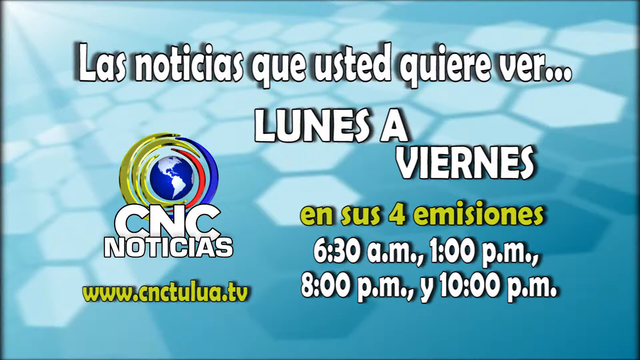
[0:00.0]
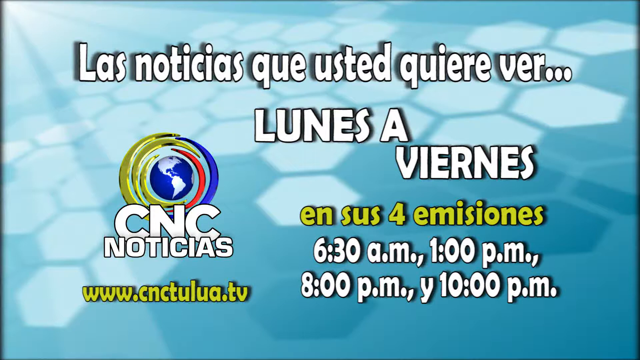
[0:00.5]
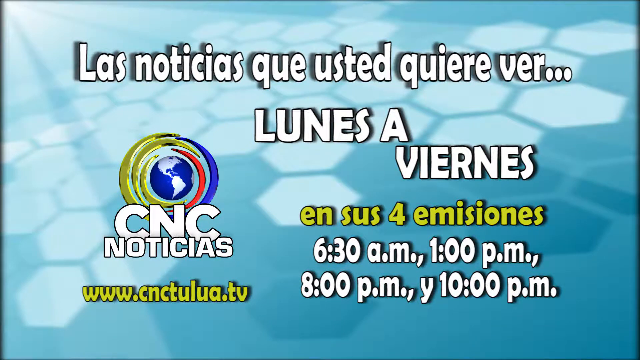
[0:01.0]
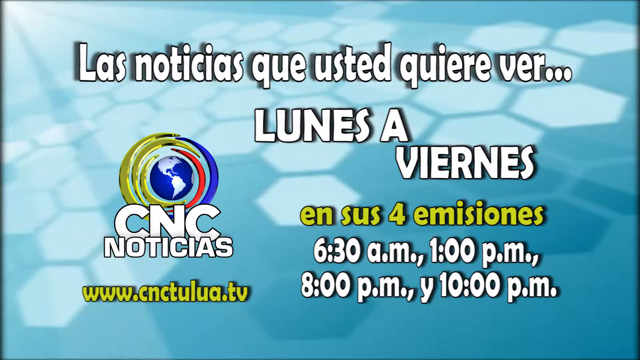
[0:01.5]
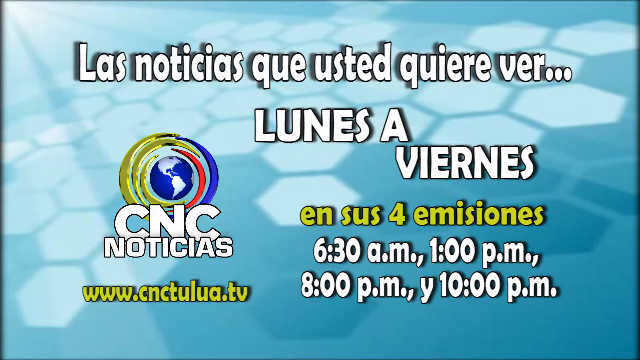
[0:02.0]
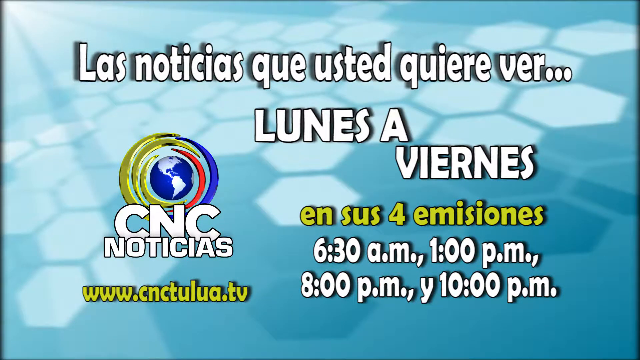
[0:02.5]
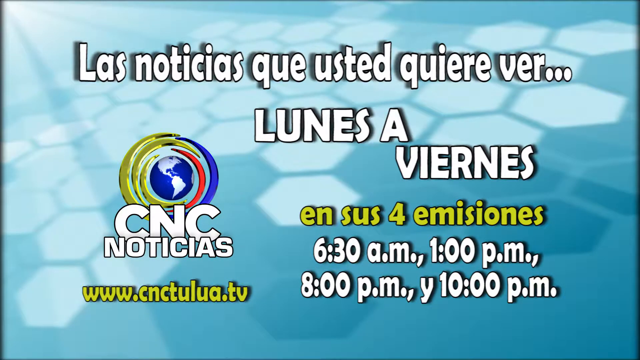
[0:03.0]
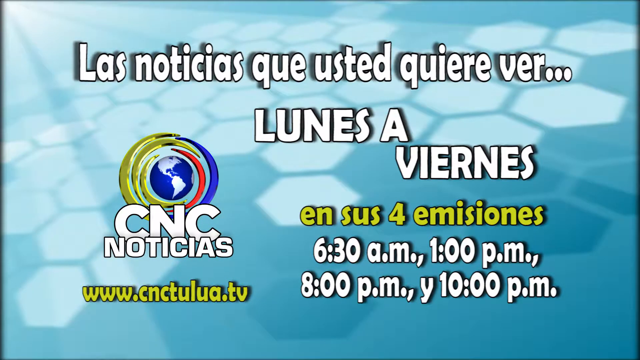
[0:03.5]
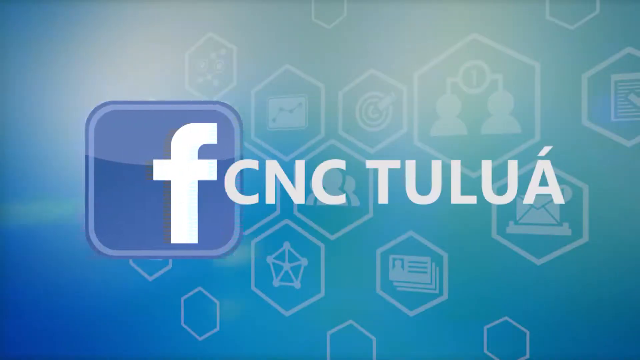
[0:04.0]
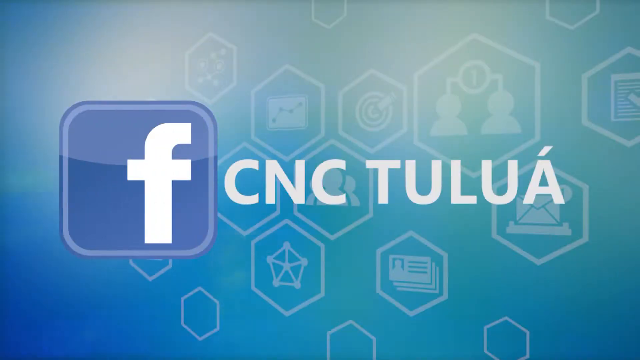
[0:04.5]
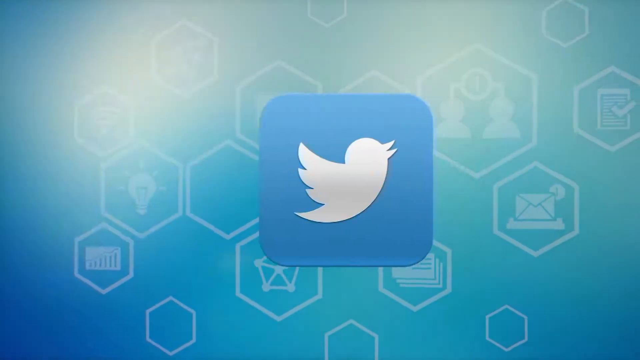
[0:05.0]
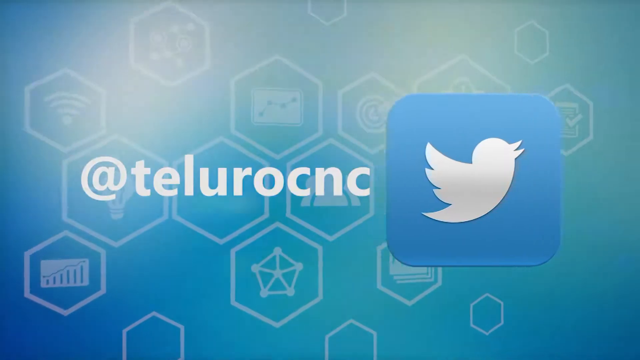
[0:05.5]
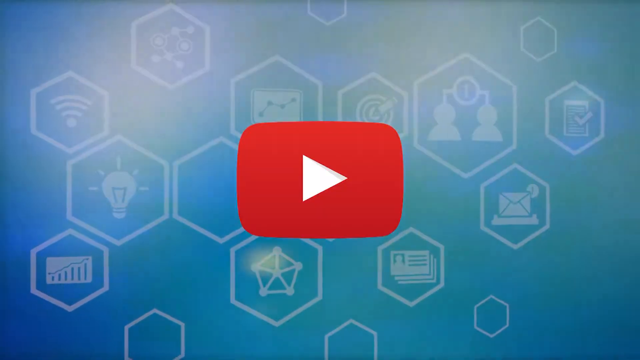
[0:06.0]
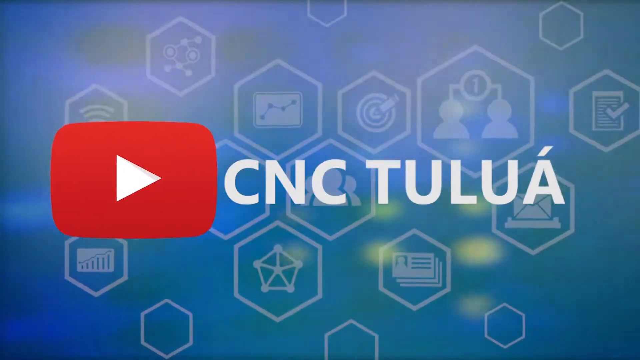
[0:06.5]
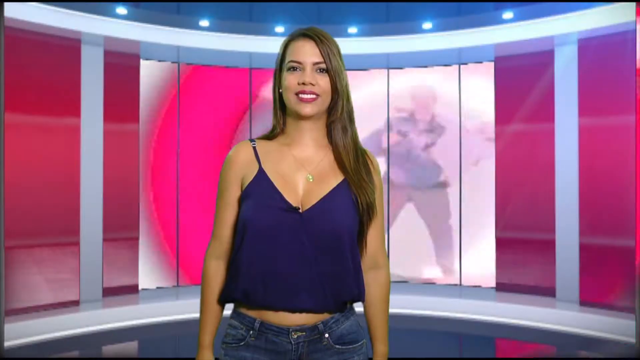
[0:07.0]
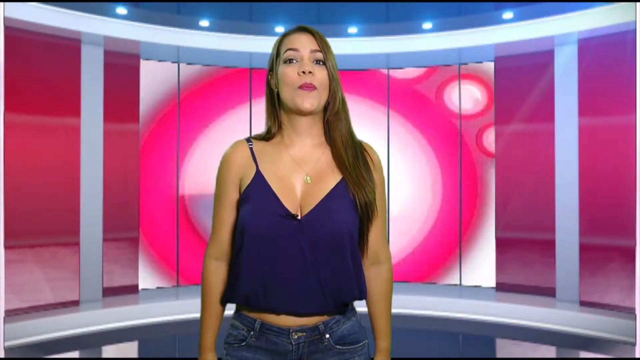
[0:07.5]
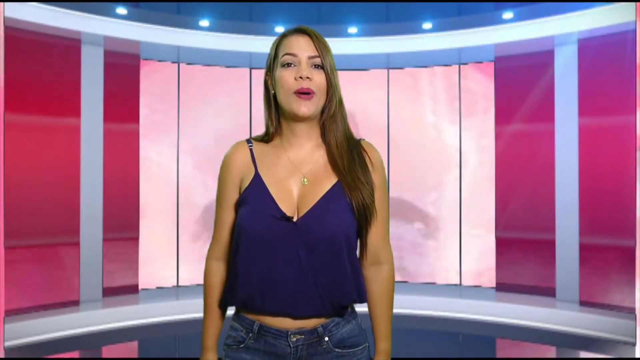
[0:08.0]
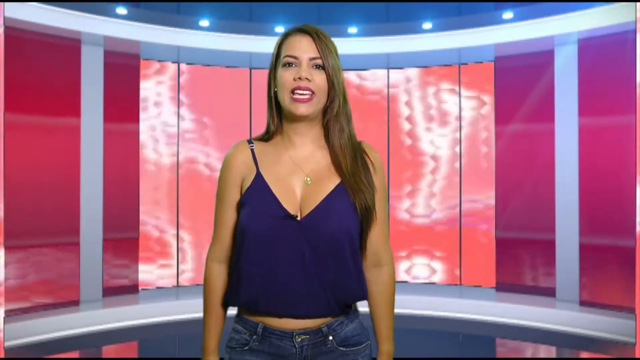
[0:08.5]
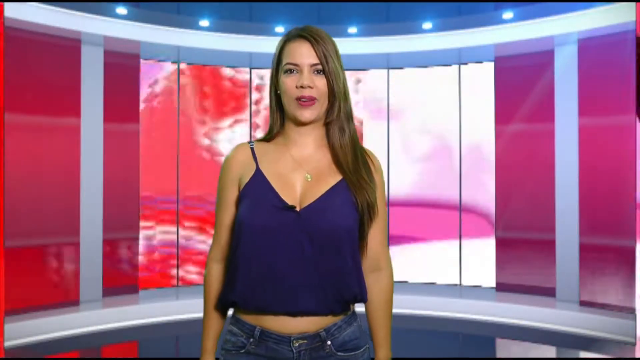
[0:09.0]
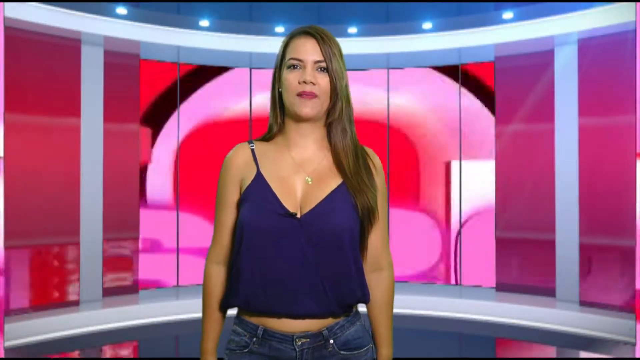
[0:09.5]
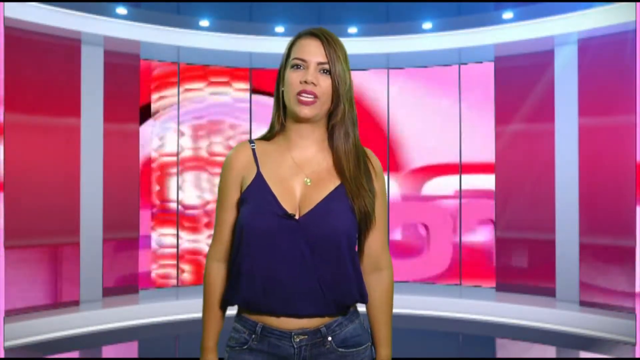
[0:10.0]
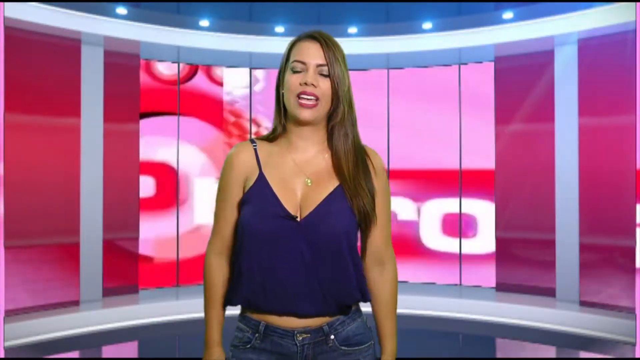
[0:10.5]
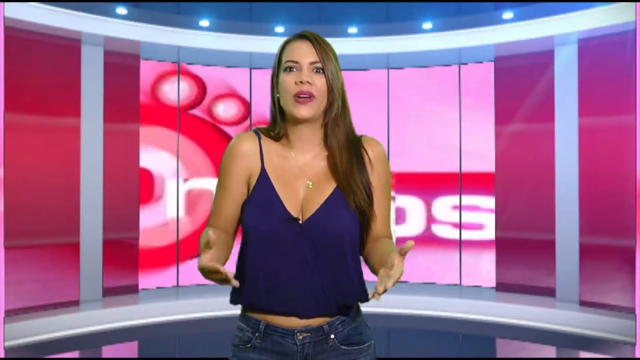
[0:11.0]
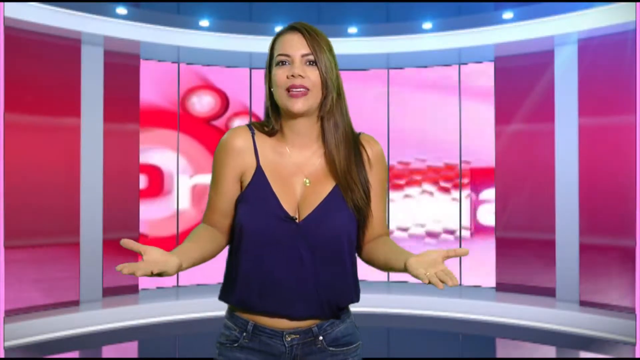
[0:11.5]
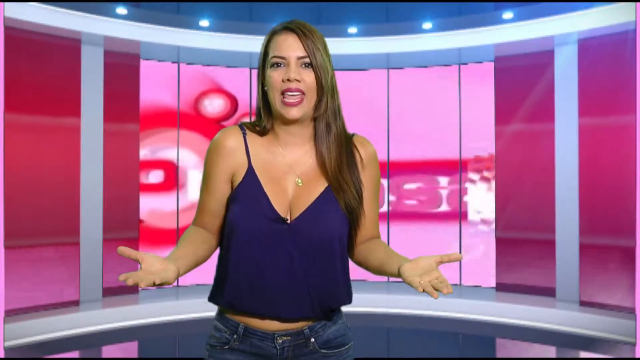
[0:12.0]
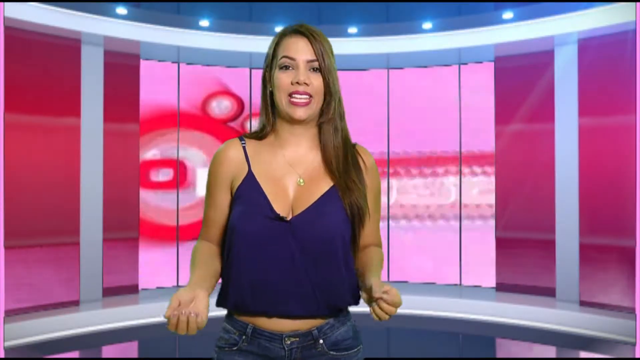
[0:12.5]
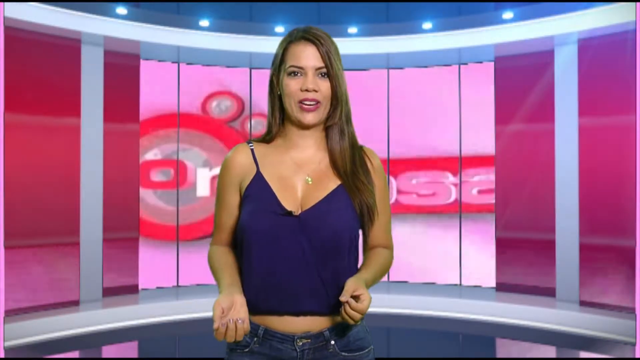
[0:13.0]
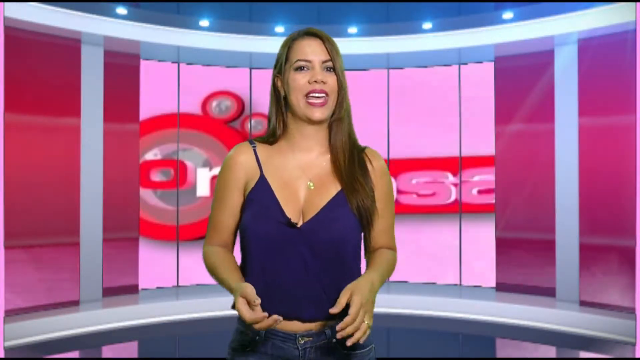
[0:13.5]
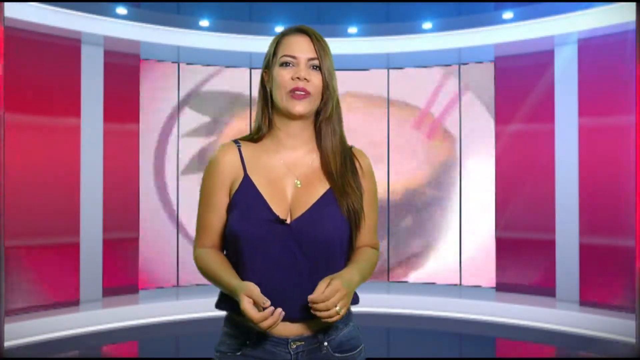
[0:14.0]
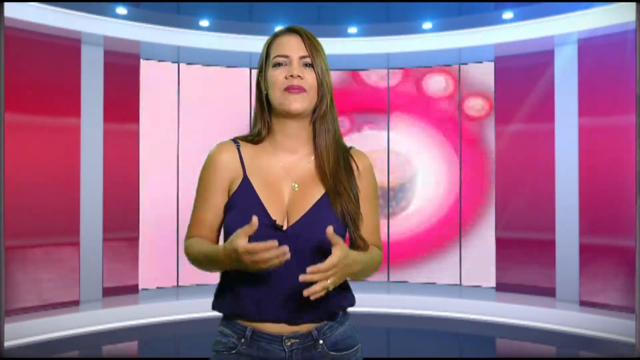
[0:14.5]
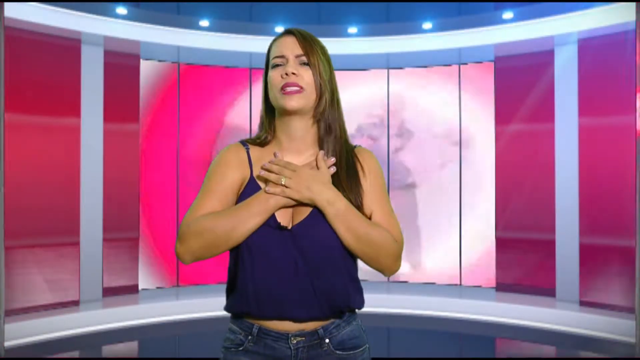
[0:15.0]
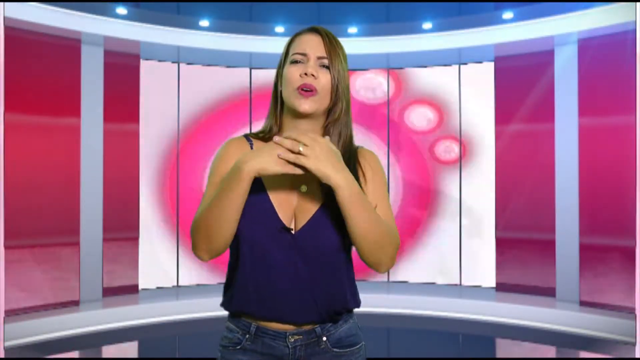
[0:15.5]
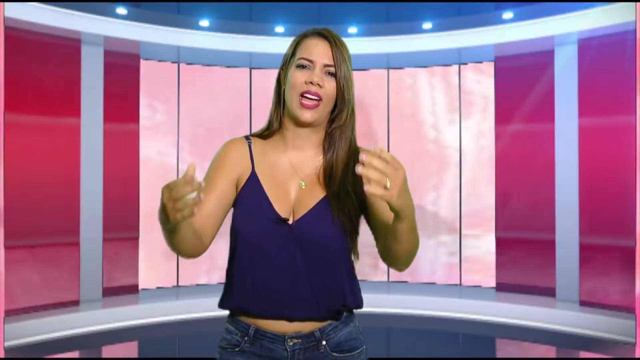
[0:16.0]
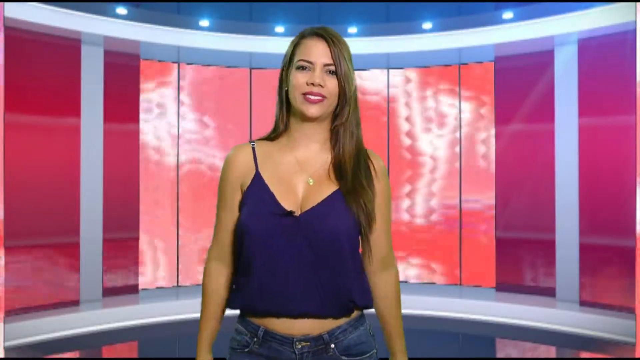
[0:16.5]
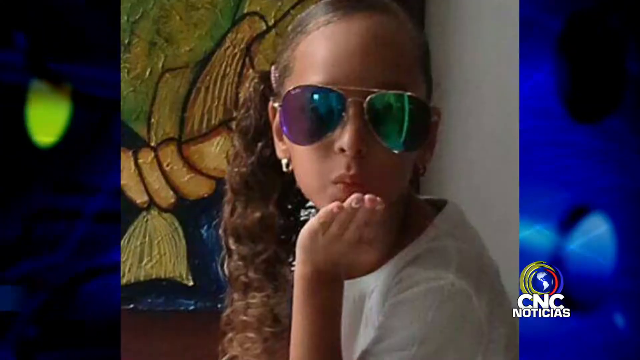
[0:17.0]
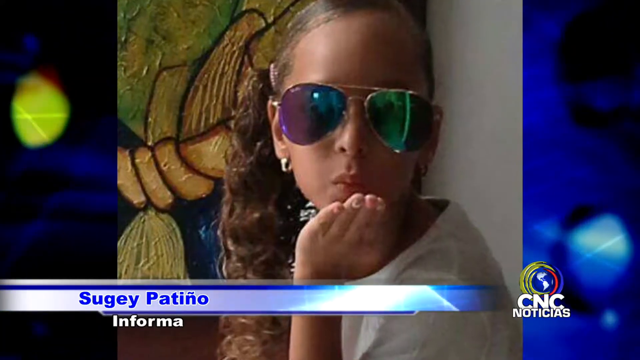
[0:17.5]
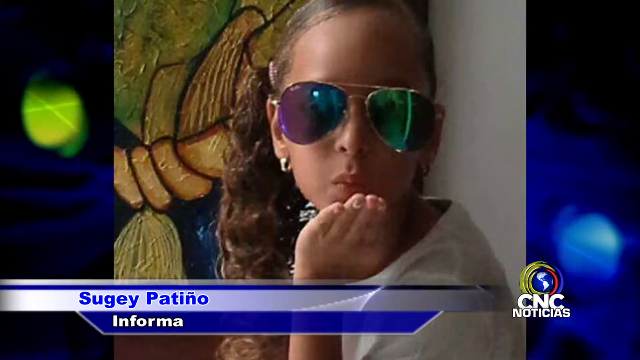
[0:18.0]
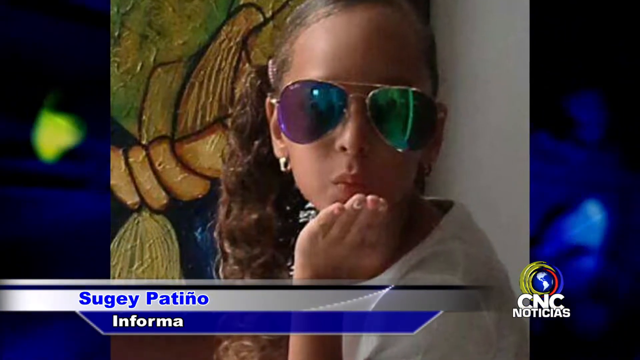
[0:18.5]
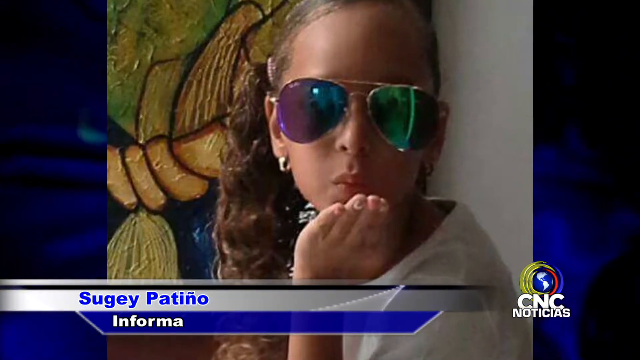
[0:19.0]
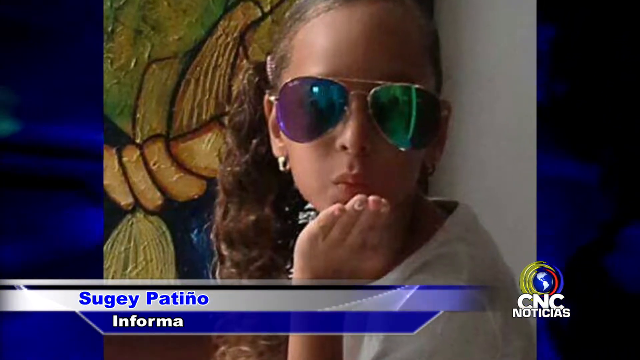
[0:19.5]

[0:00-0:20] An introductory screen written in Spanish appears, with times listed on the lower right side: 6.30am, 1pm, 8pm and 10pm. Next, addresses for YouTube, Twitter and Facebook are shown. The screen then transitions to a woman wearing a deep blue V-neck top with skinny straps over deep blue denim. She is seen from the head to the waist and has long brown hair that reaches down past her chest. She speaks, shrugging and gesturing as she talks. Behind her is a colourful lit blue and pink backdrop with a screen in the middle displaying various images, such as food. Next, a little girl appears, her name written as "Suge Plateno". She wears aviator-shaped sunglasses, her hair is swept sideways, and she looks like she is blowing a kiss.